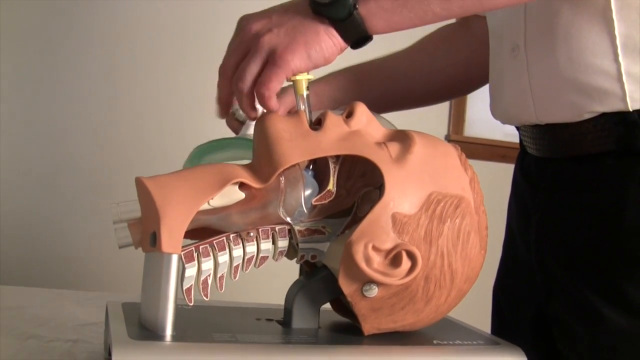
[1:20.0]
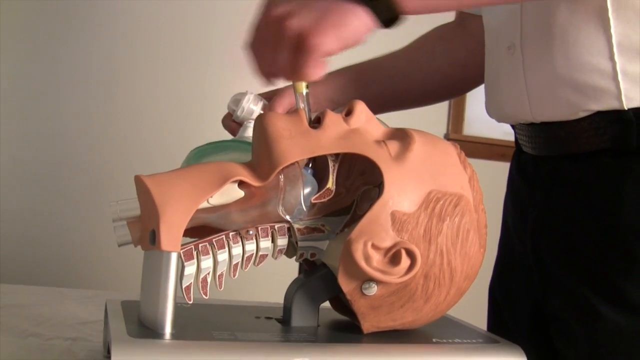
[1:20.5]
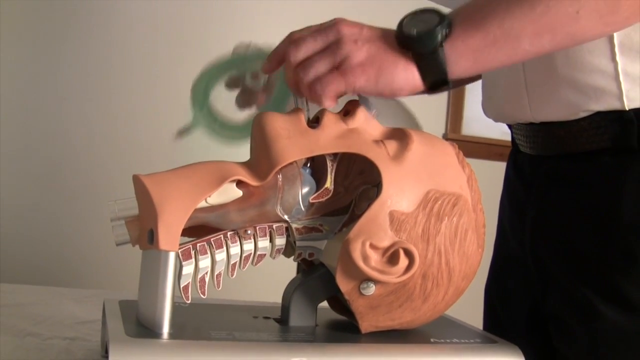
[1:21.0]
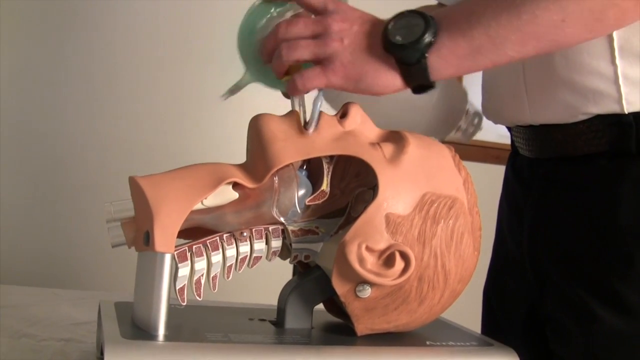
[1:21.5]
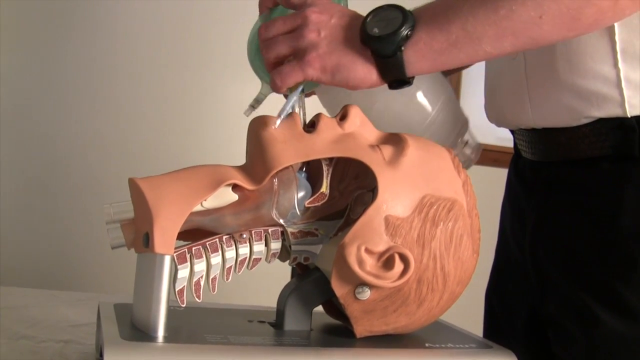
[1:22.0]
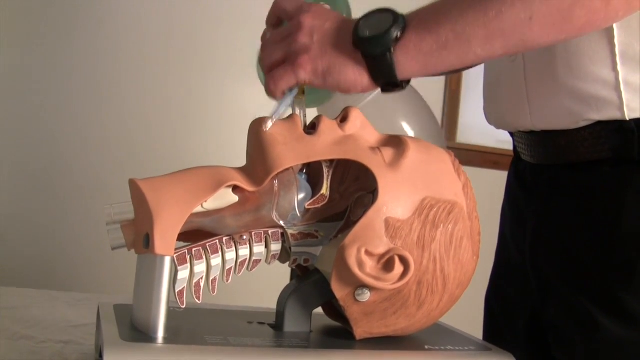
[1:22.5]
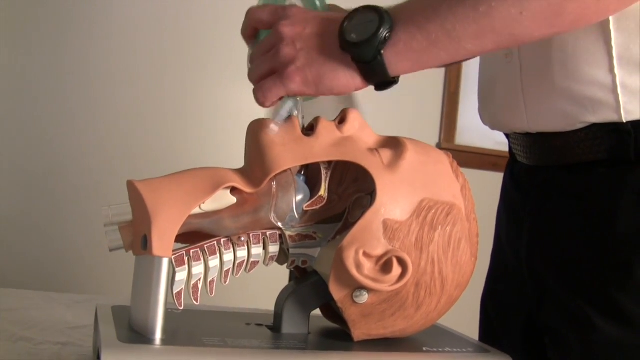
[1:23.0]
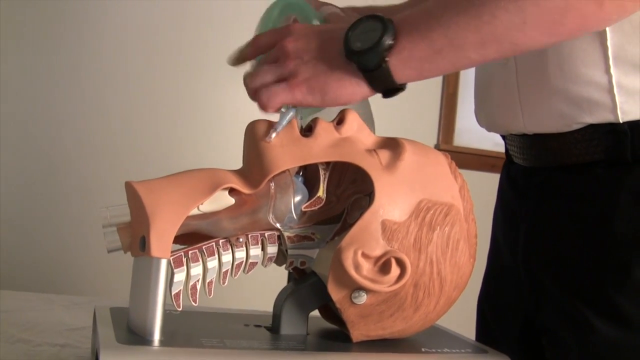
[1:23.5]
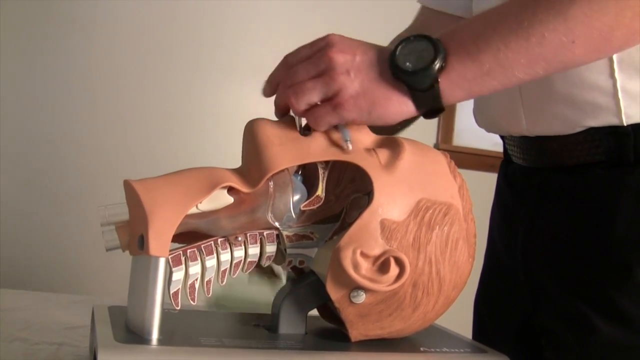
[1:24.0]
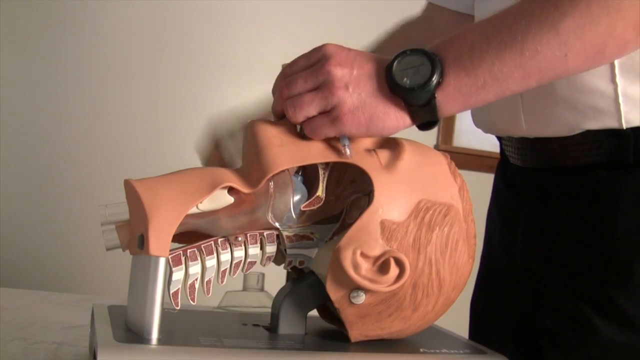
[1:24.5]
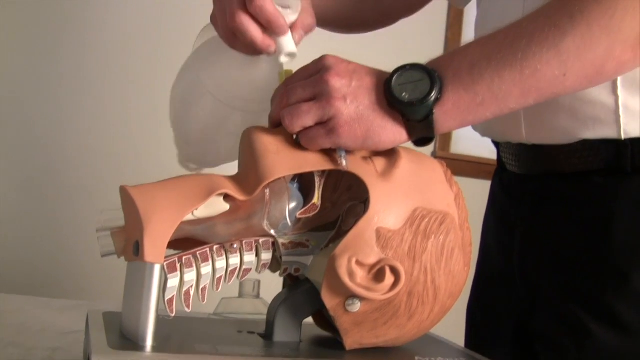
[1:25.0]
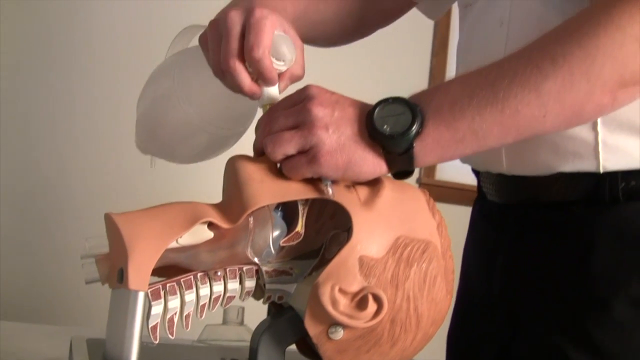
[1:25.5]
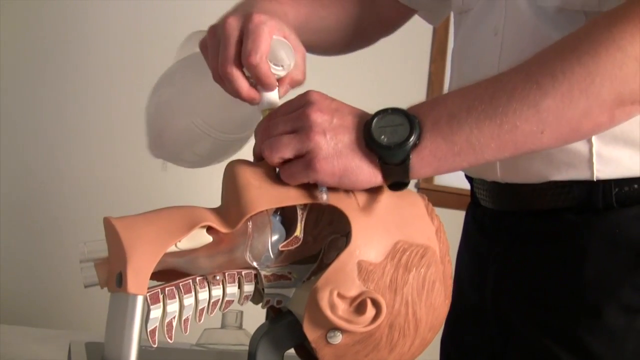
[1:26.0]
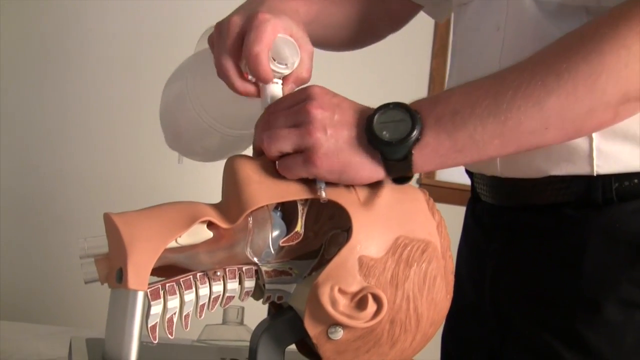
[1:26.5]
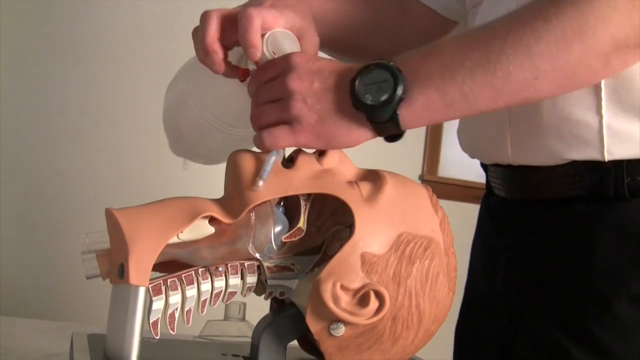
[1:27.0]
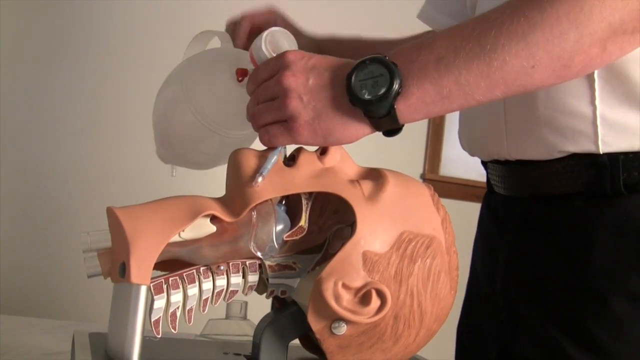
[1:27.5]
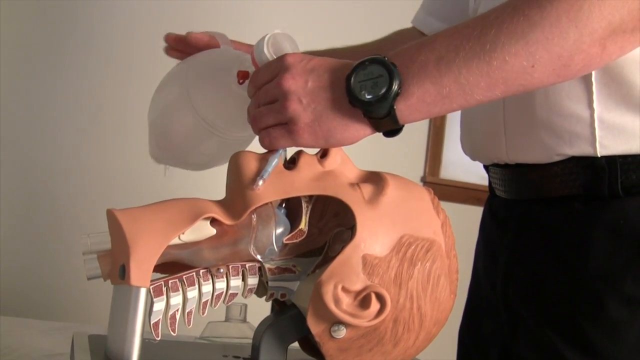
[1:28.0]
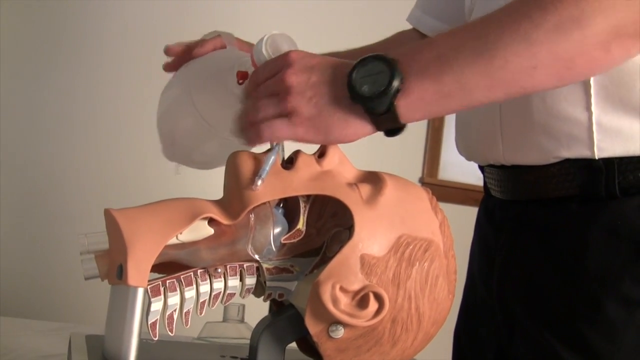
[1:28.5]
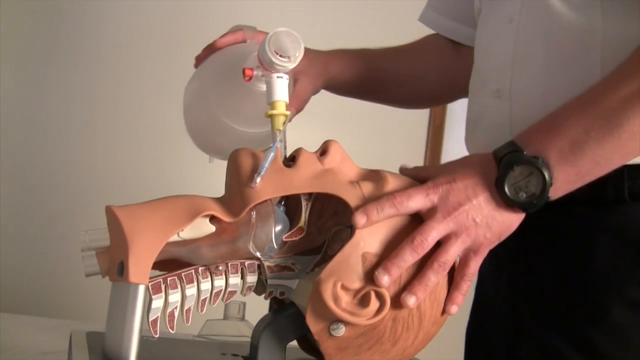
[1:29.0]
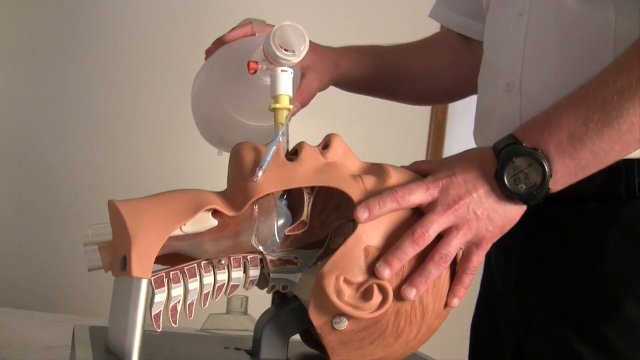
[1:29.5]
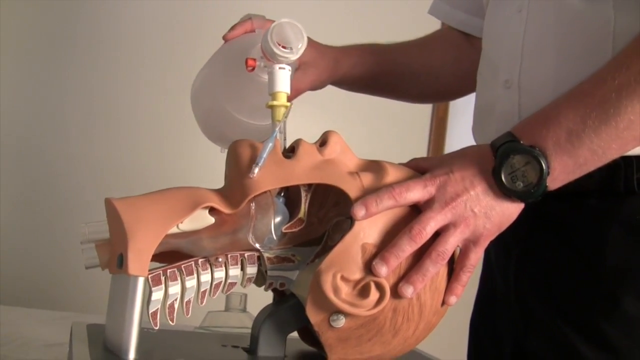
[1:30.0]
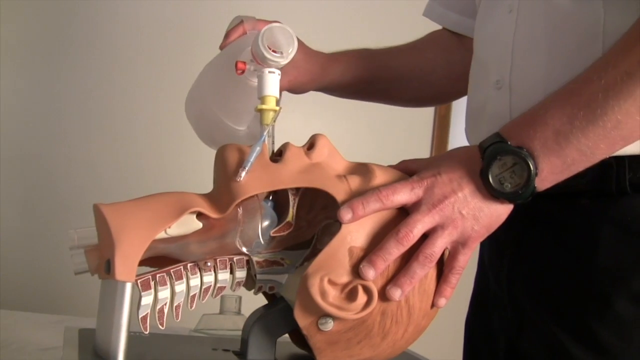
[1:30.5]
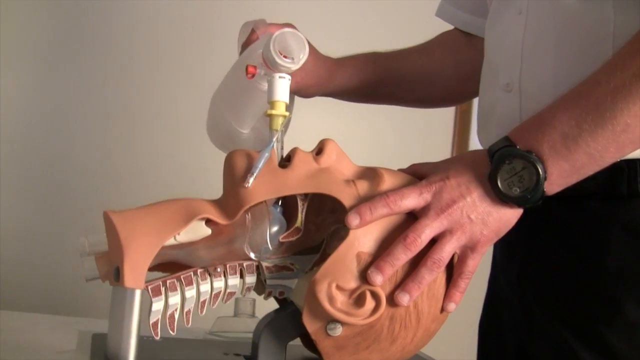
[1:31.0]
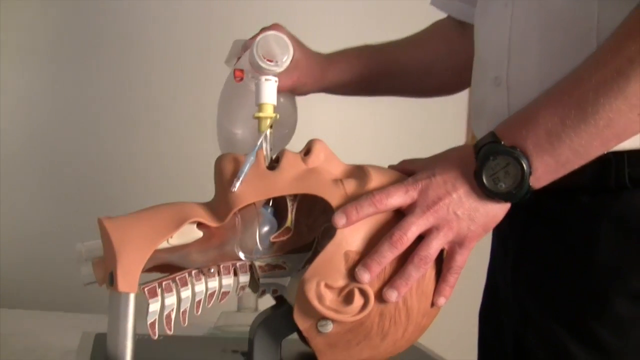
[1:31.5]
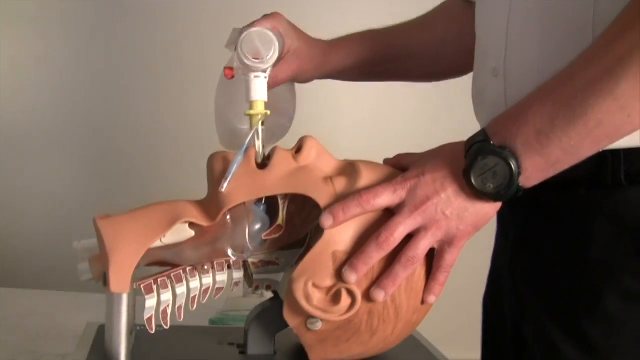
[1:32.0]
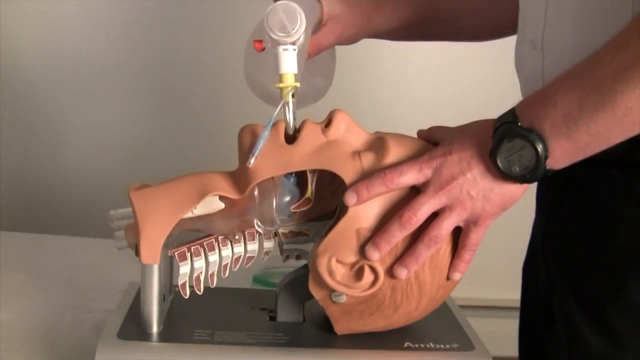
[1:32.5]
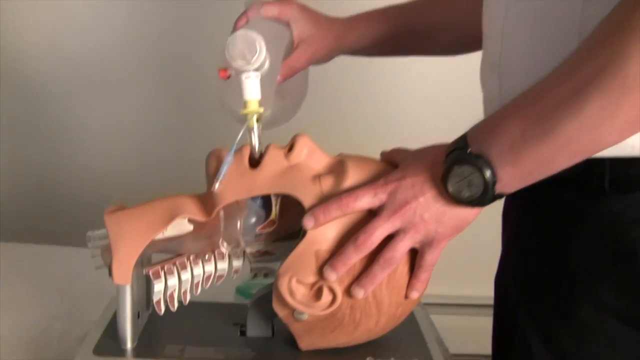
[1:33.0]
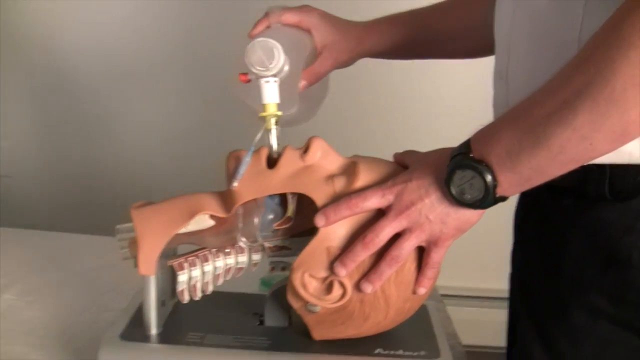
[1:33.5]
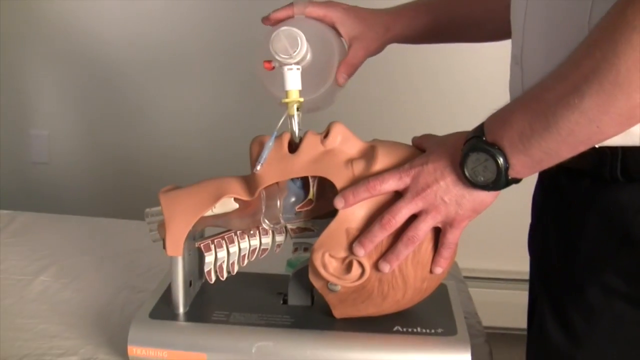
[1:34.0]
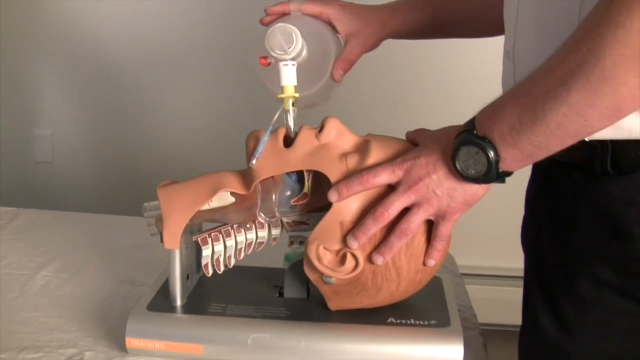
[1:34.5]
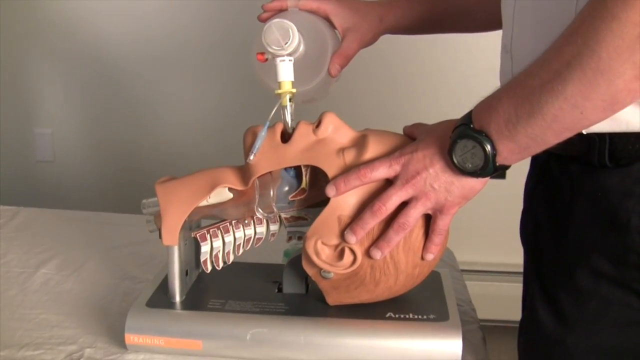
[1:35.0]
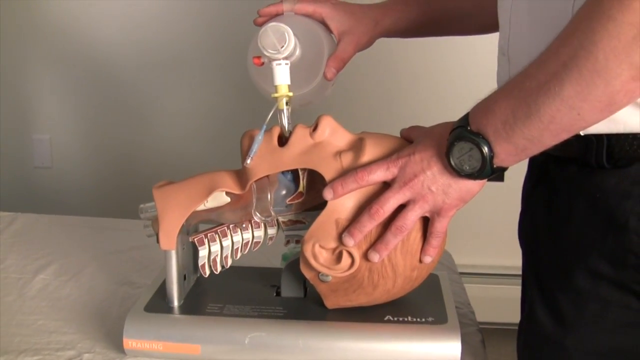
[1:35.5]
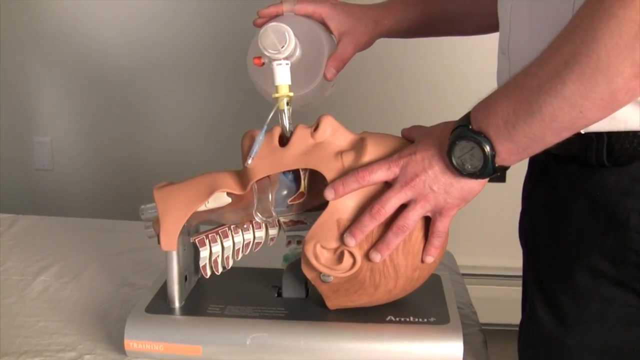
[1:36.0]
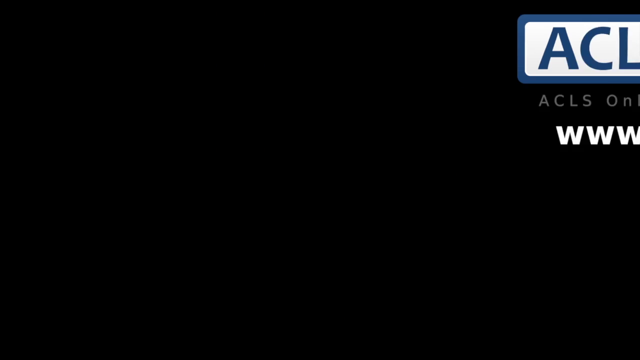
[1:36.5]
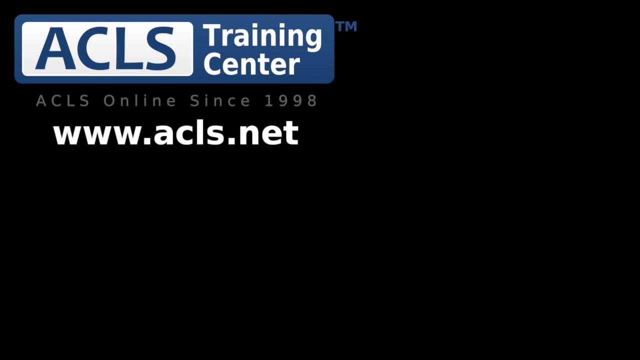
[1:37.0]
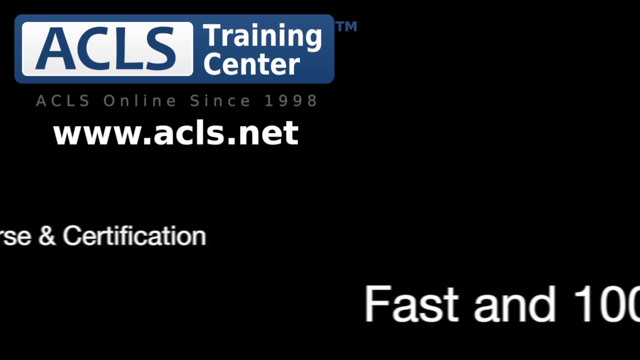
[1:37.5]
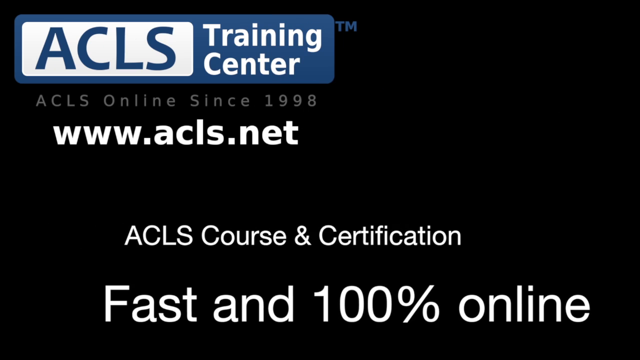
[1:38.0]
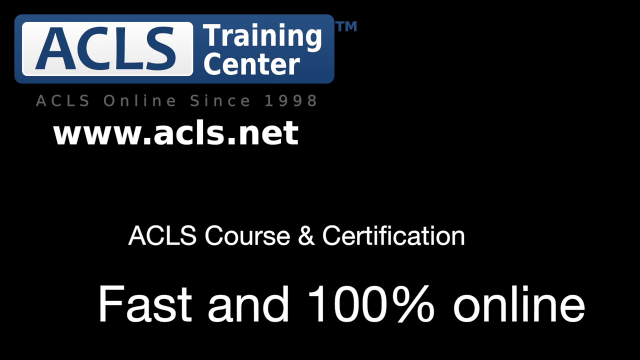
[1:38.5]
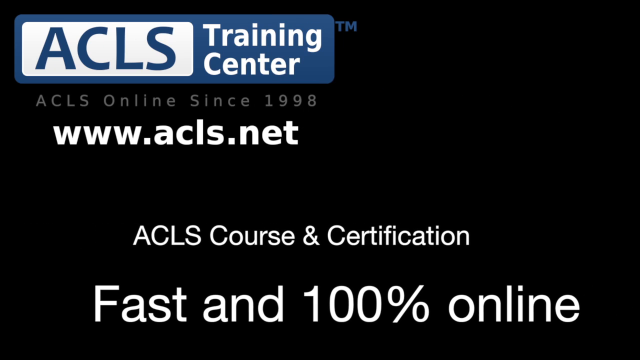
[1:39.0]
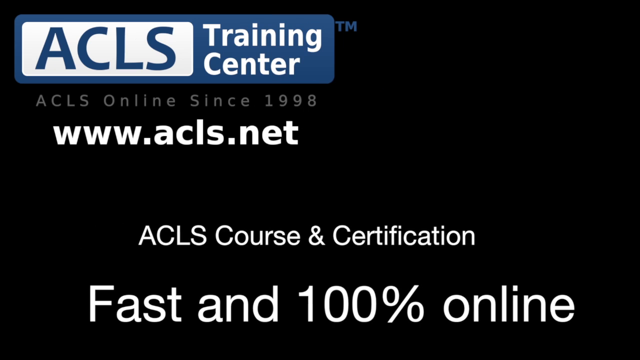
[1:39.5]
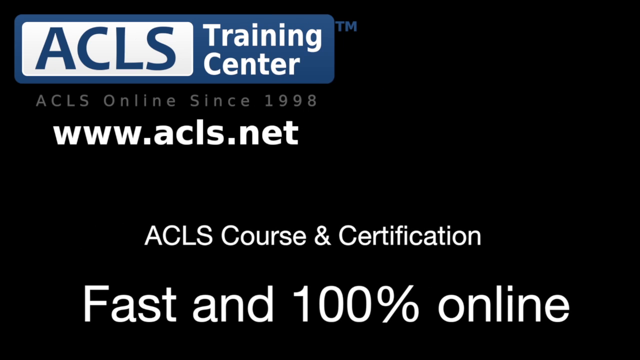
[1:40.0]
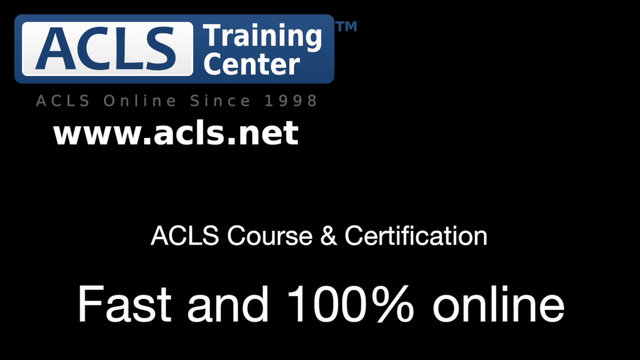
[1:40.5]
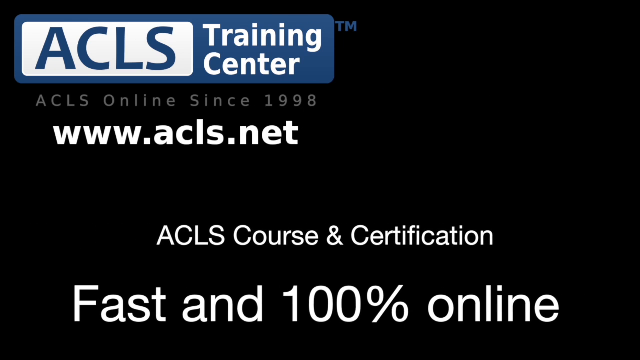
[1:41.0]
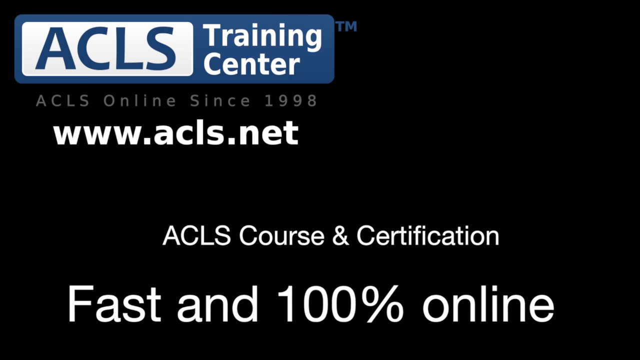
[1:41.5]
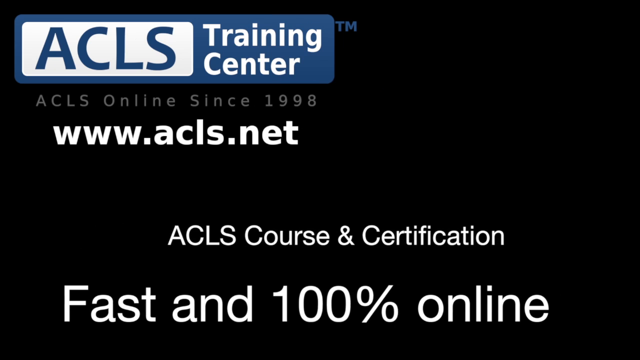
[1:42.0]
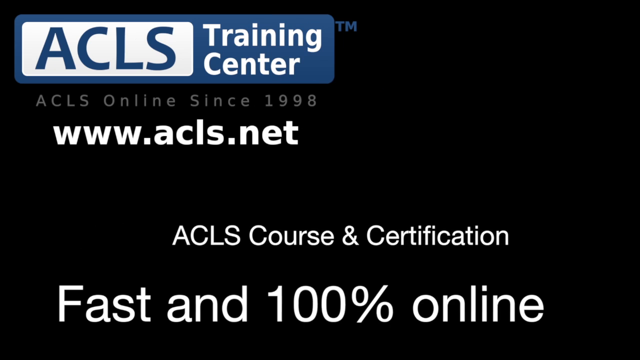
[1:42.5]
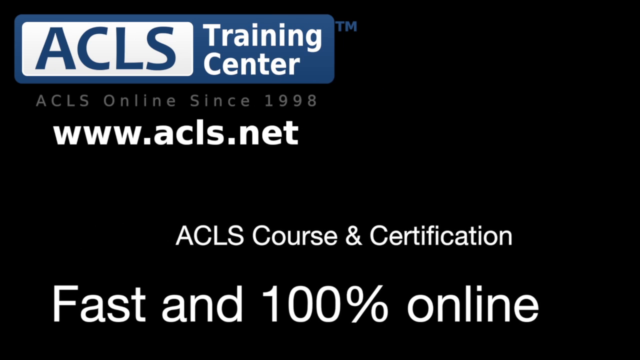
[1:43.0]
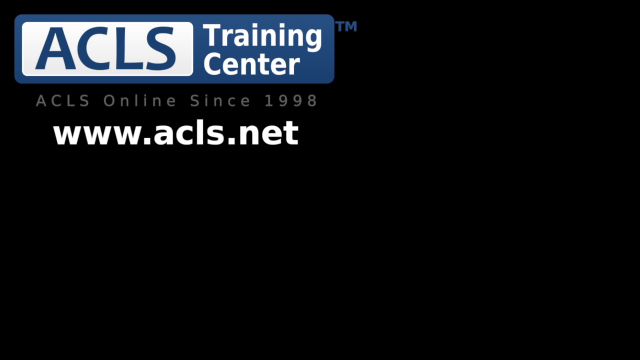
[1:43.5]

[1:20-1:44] A mannequin head in the middle of the frame faces upwards, apparently viewed from its left side. Its left cheek has been cut out so the inside is visible; the cutout runs all the way around the left cheek up to the bottom of the left ear and the back of the head, and extends down the left side of the throat, forming a huge cutout from the cheek toward the throat. A man stands over the mannequin head. His left hand holds a tube sticking out of the mannequin's head, and his right hand holds what looks like a mask. He then uses his left hand to attach the tube to what looks like a big balloon-like object, a pump, in his right hand. He starts squeezing the white bulbous pump into the tube, apparently pushing air into the tube inside the mannequin's throat, holding the pump with his right hand. He places his left hand on top of the mannequin's head as if to stabilize it. A black outro screen follows. The words "ACLS Training Center" in a blue banner fly in from the right side of the screen, and underneath, white text reads "ACLS online since 1998, www.acls.net". Two more texts fly in from the left and right at the bottom, reading "ACLS course and certification, fast and 100% online". The text slowly drifts to the right and left and then zooms out to the right and the left.